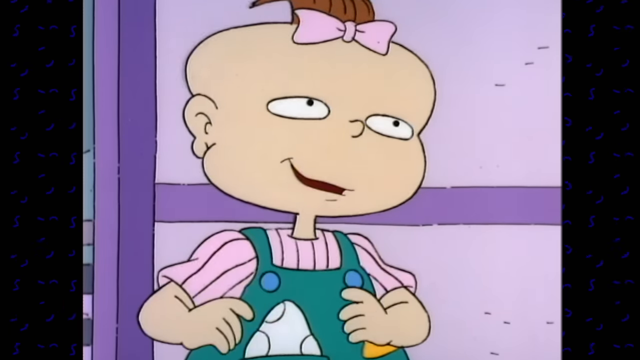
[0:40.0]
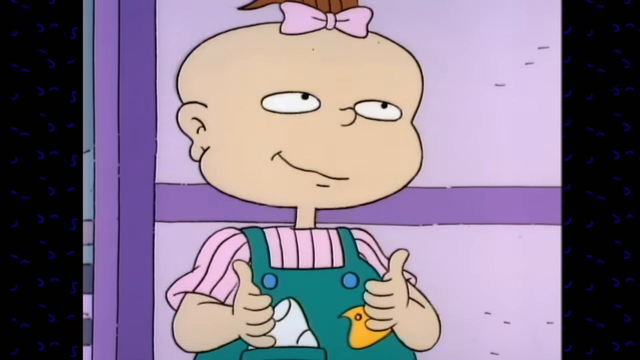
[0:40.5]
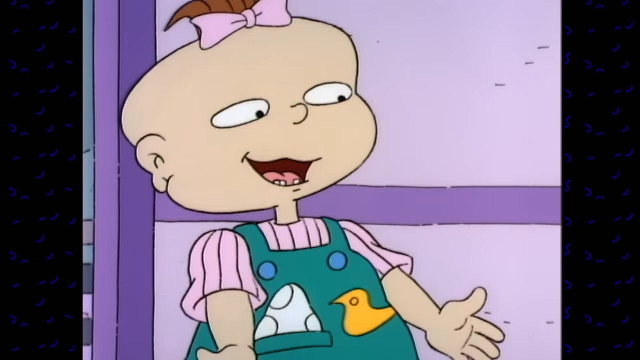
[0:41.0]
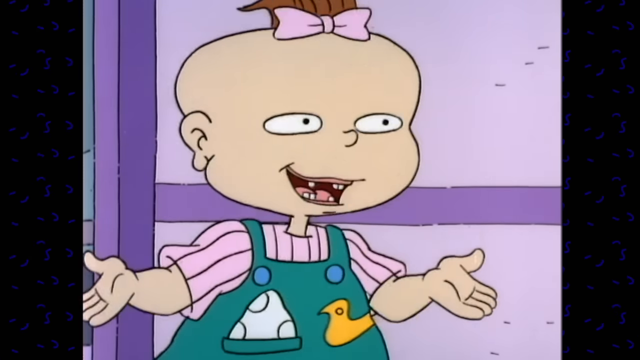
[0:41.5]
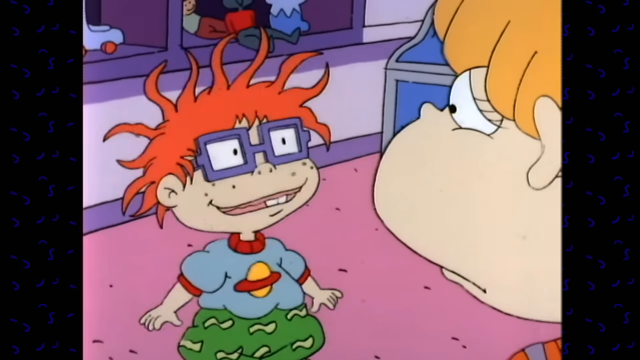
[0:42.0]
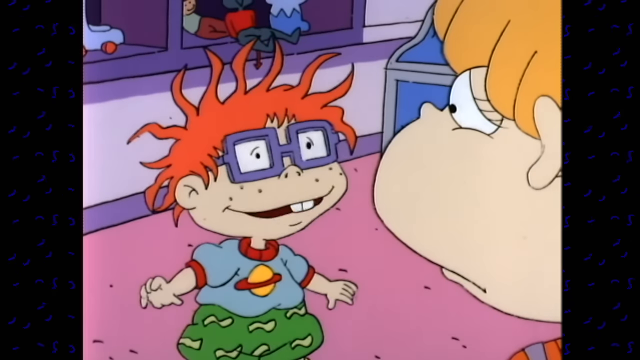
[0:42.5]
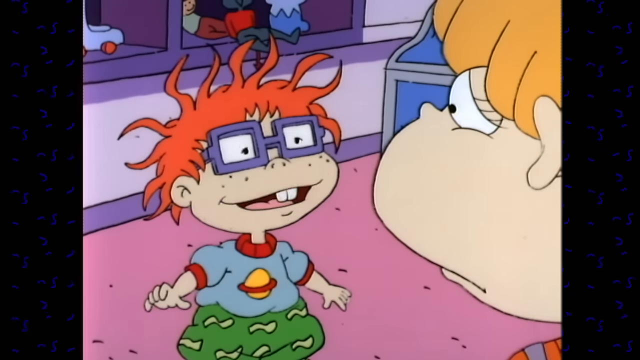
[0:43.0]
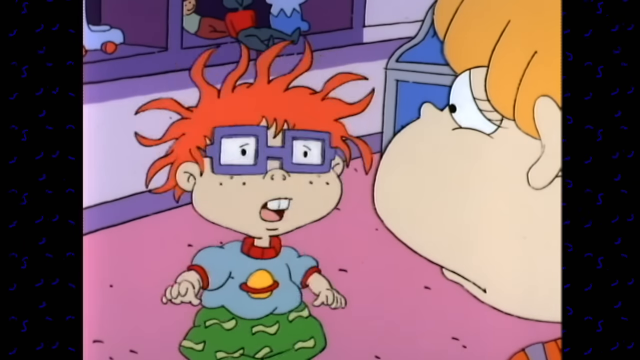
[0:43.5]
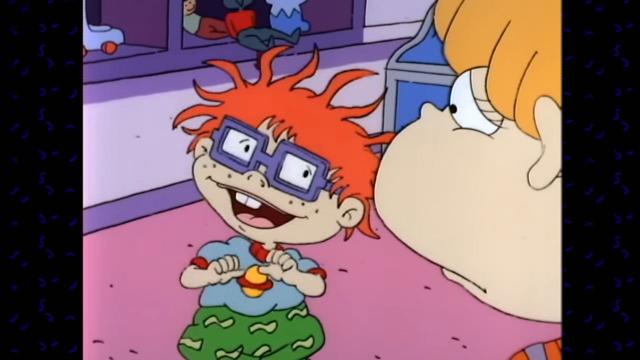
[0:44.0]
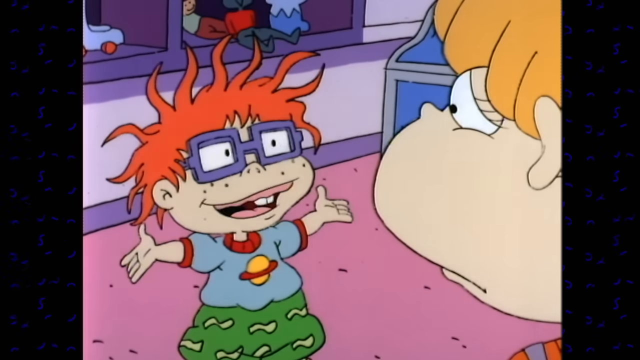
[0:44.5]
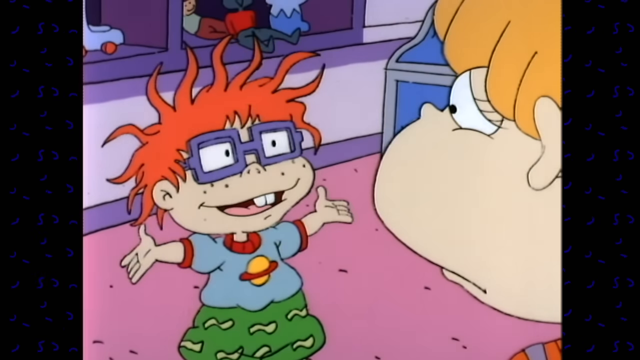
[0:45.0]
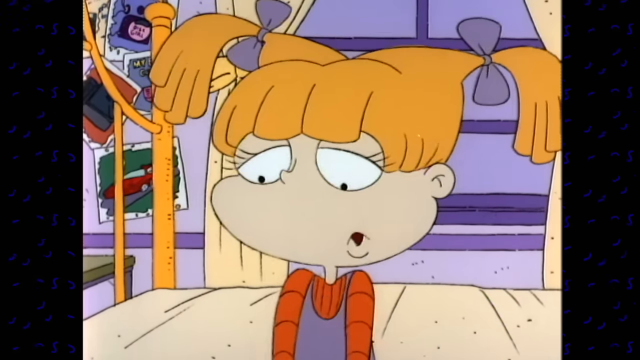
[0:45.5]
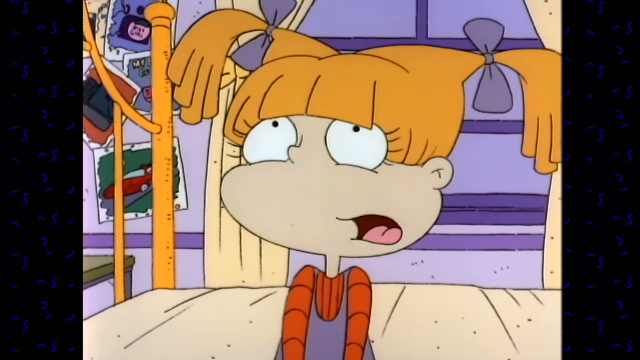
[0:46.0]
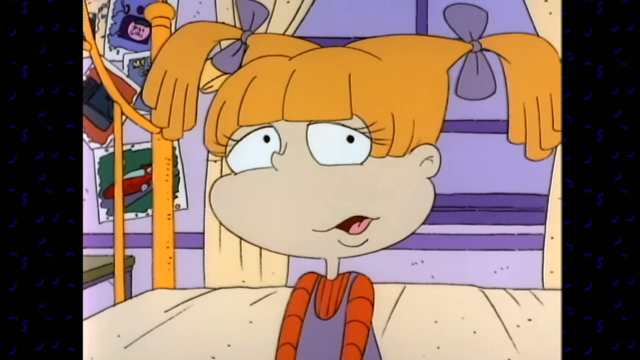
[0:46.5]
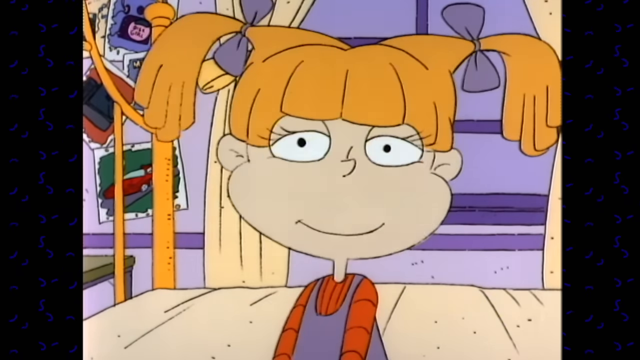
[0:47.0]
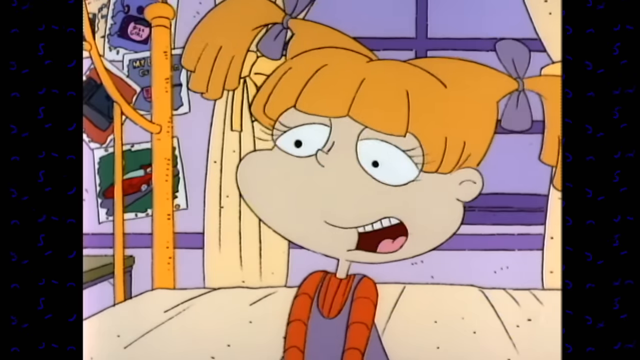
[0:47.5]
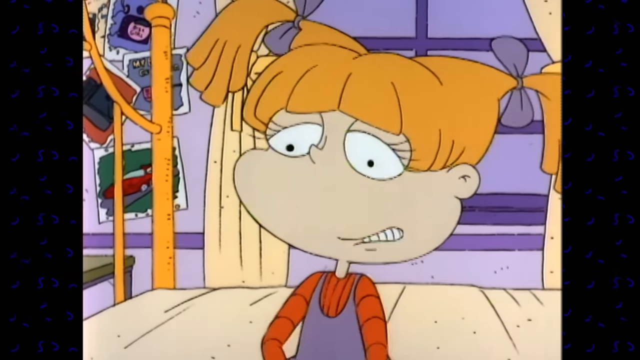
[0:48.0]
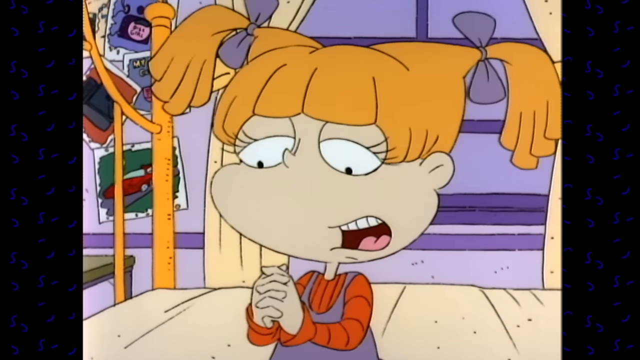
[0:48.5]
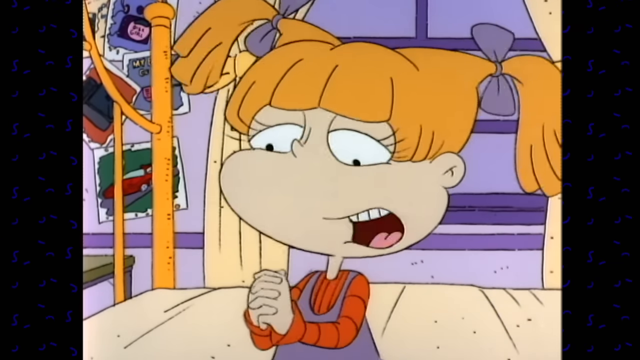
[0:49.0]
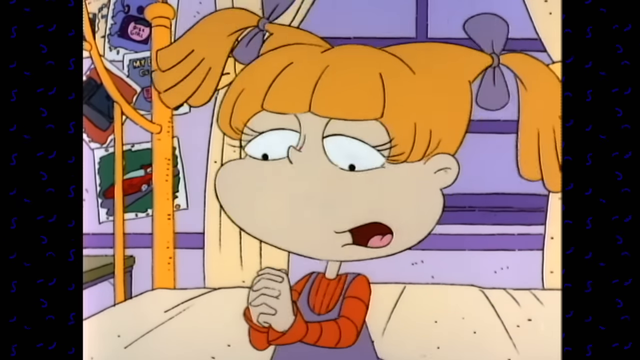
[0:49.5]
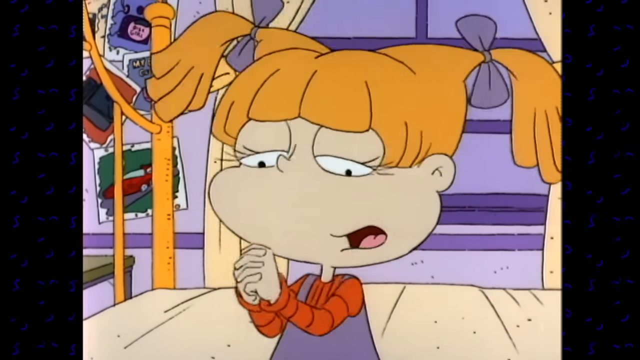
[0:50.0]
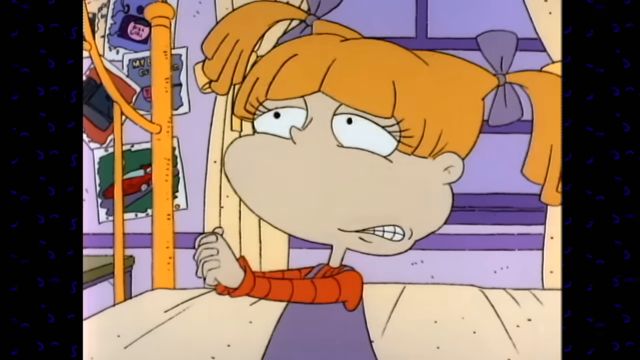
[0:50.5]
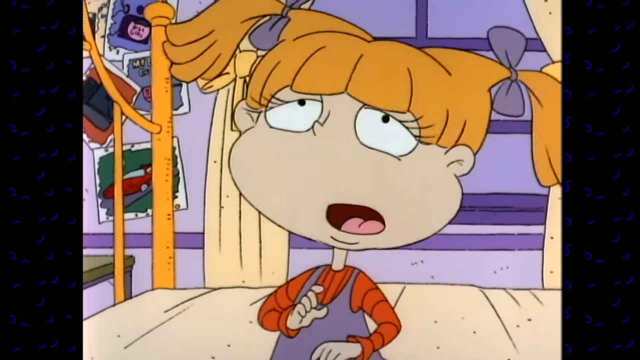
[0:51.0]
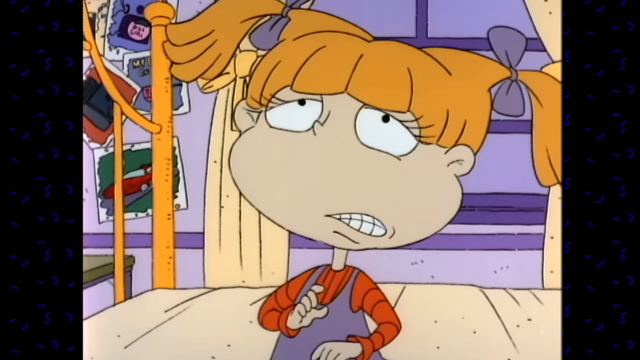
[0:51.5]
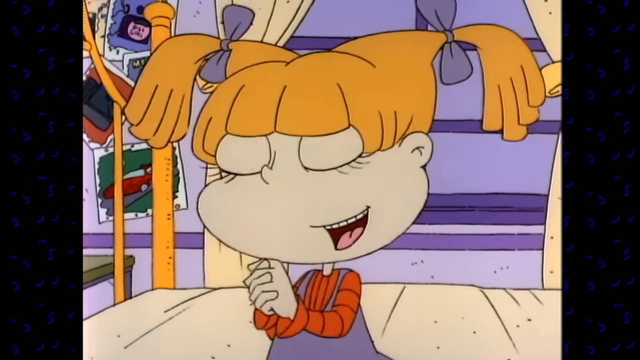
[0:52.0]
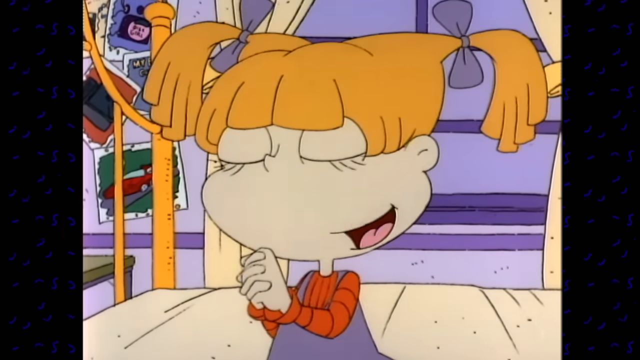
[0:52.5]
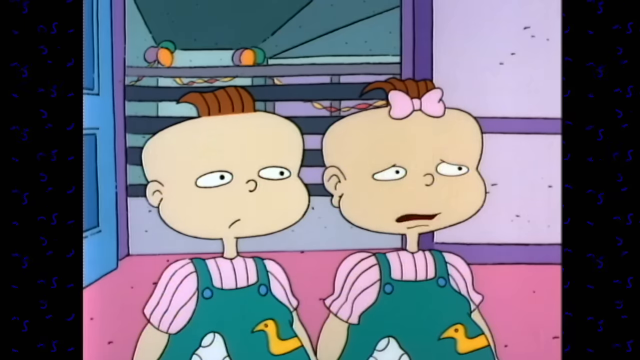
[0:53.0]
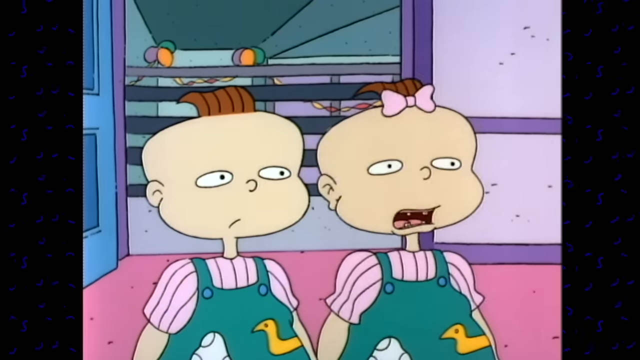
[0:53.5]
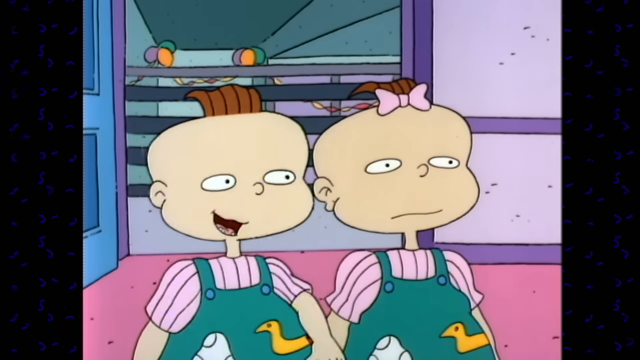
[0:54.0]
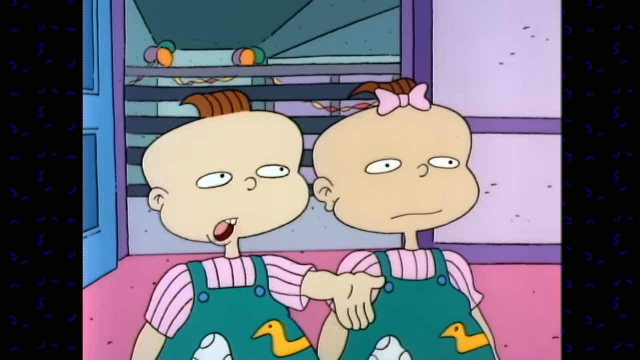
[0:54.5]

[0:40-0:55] The babies are still talking to Angelina in her room. They are on the floor, and she is sitting on the edge of her bed, seemingly listening to them. She looks very unsure throughout, with her hands folded in front of her, kind of looking up at the sky, shaking her head and shrugging her shoulders. Each of the babies takes a turn speaking to her, apparently trying to make her feel better about the situation.